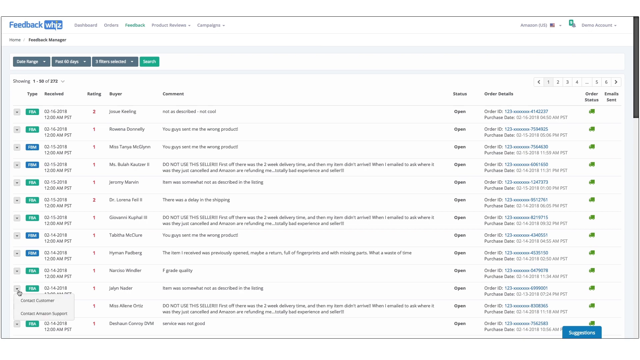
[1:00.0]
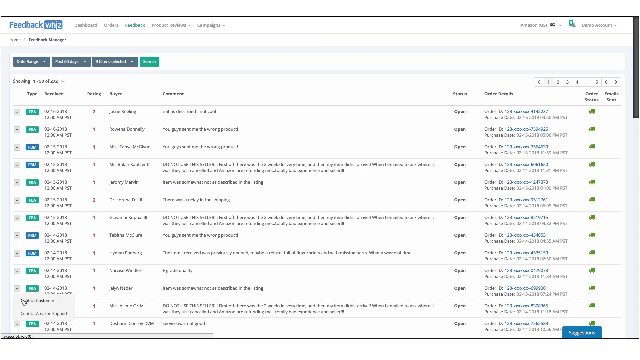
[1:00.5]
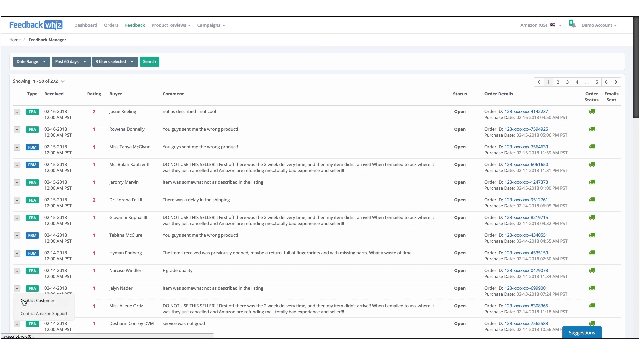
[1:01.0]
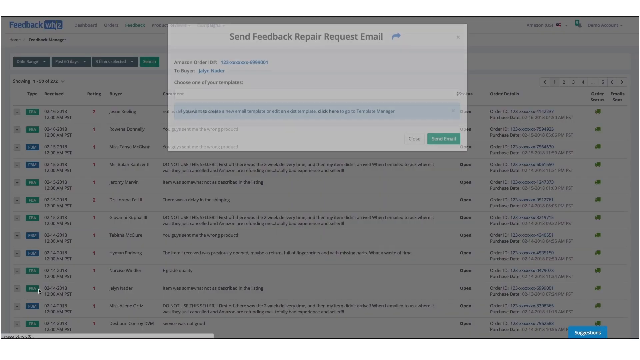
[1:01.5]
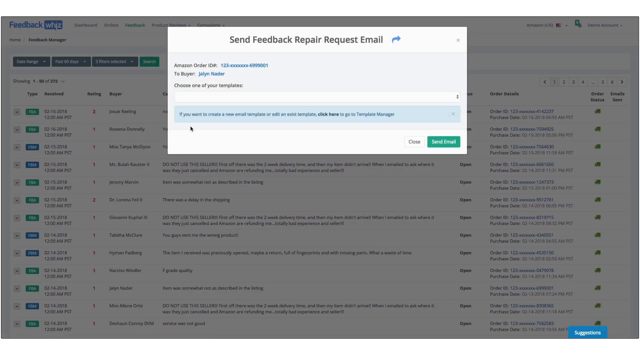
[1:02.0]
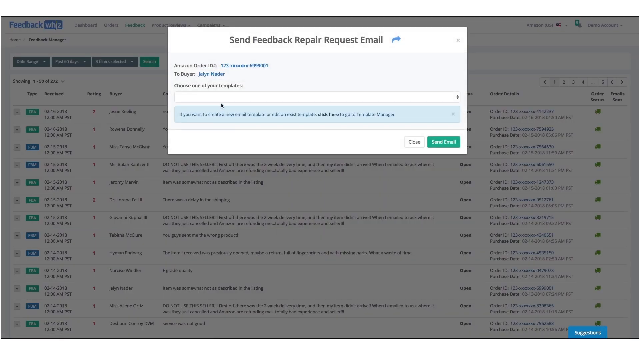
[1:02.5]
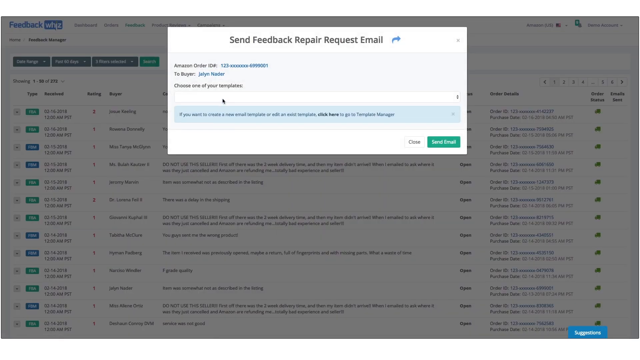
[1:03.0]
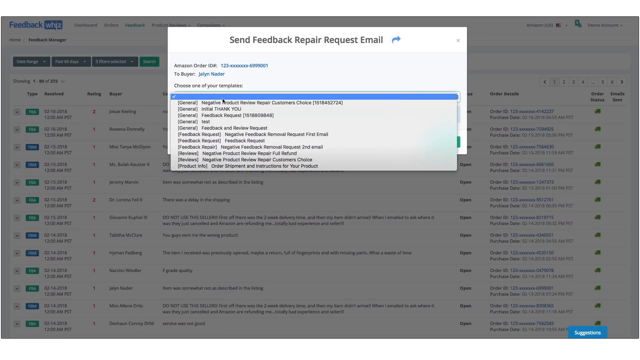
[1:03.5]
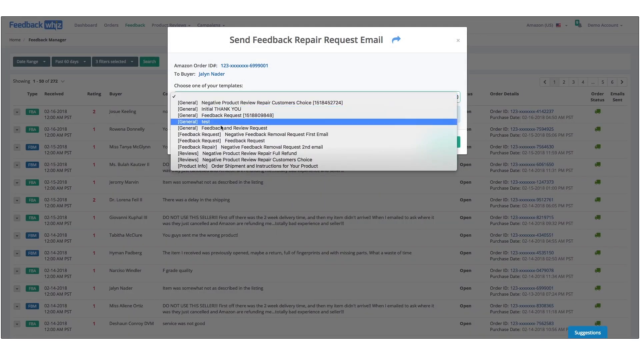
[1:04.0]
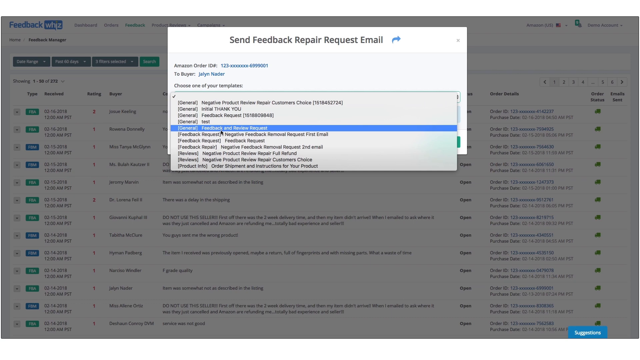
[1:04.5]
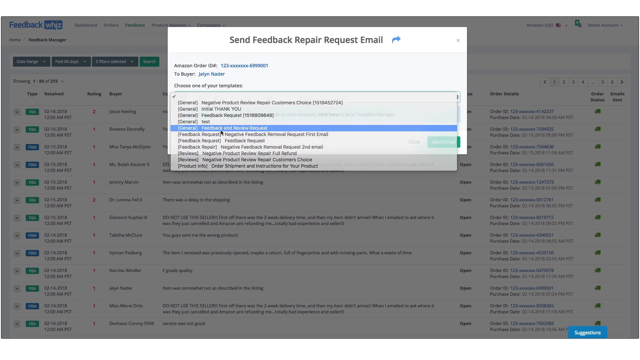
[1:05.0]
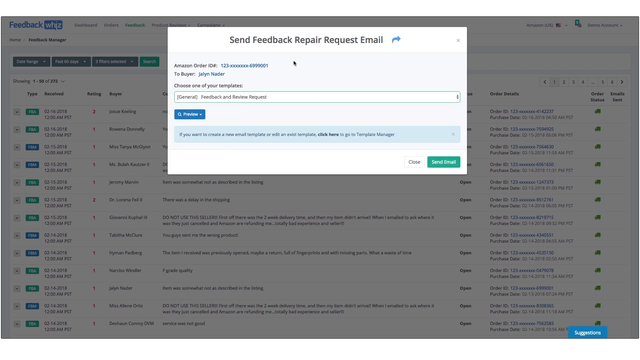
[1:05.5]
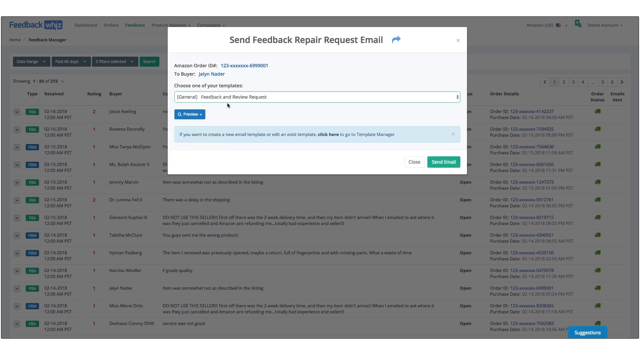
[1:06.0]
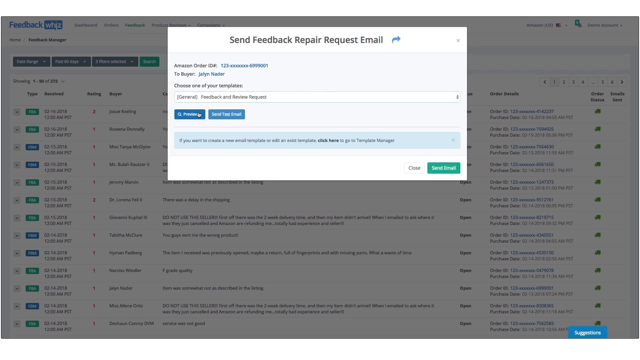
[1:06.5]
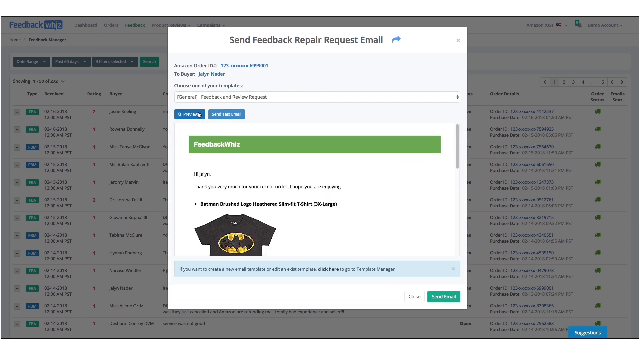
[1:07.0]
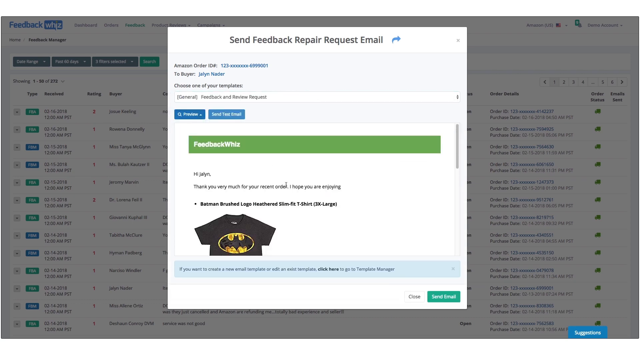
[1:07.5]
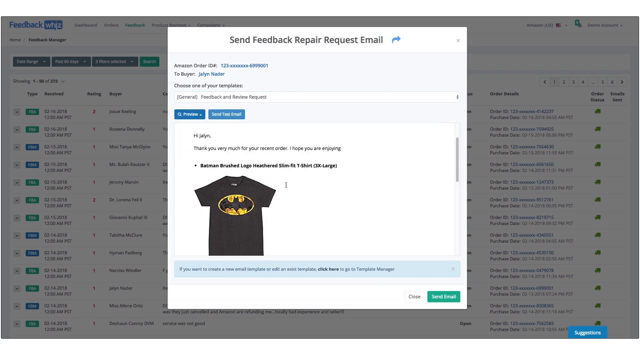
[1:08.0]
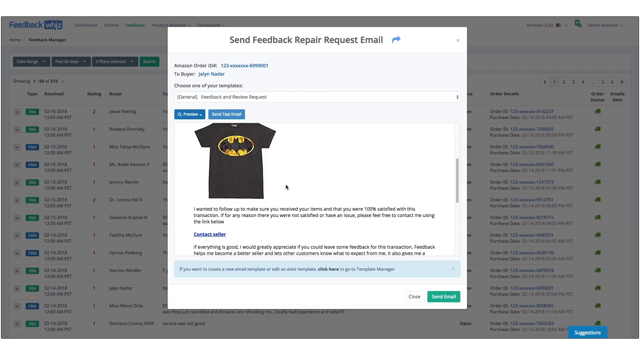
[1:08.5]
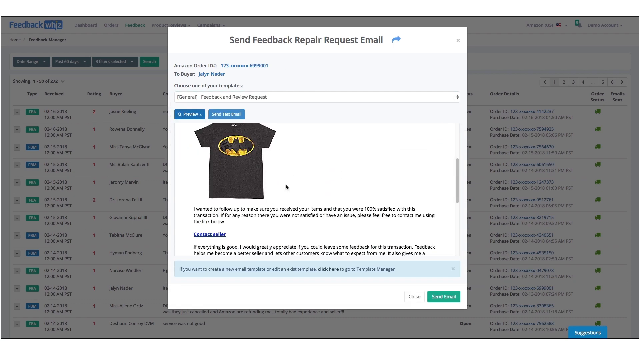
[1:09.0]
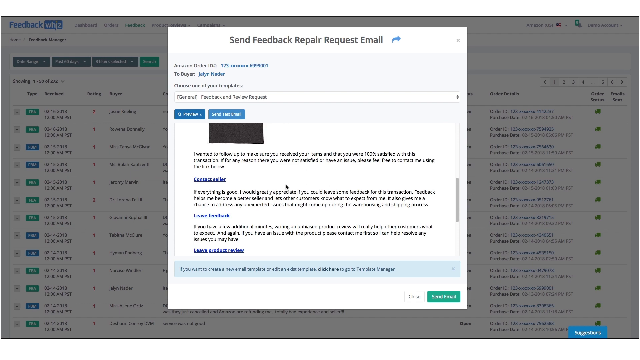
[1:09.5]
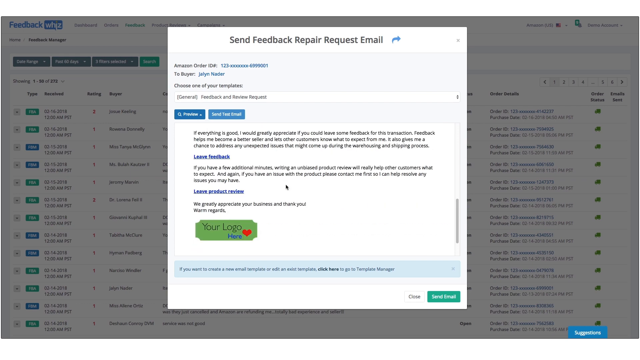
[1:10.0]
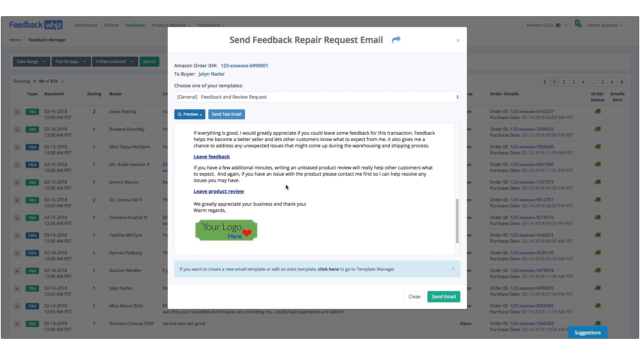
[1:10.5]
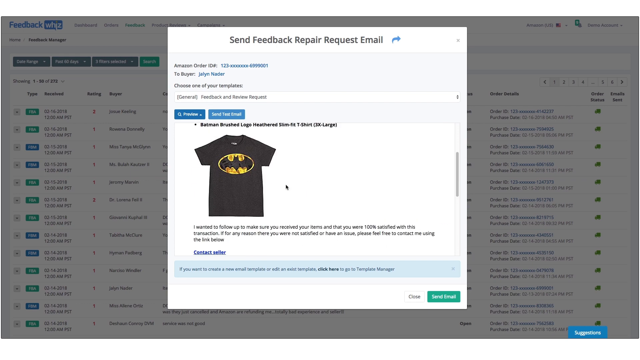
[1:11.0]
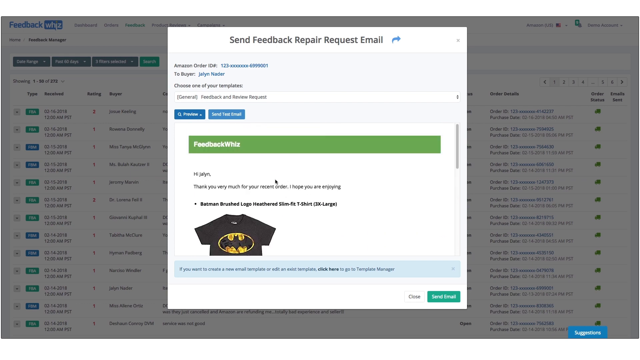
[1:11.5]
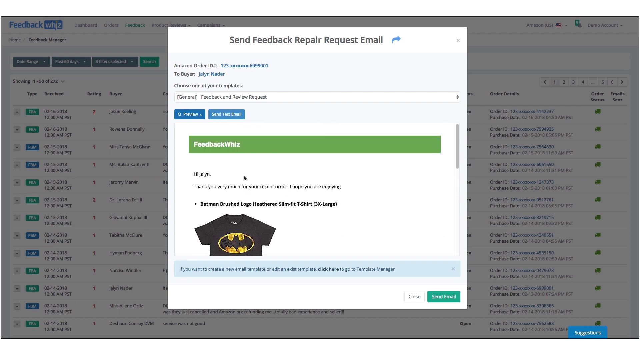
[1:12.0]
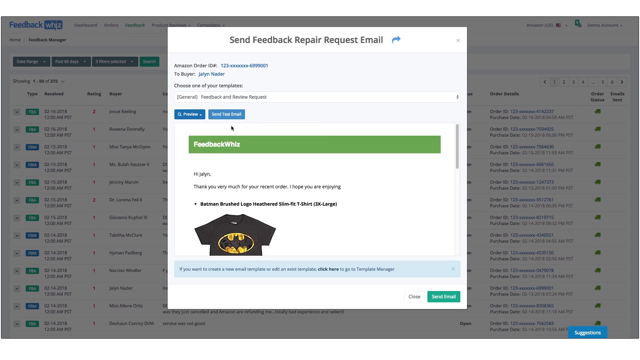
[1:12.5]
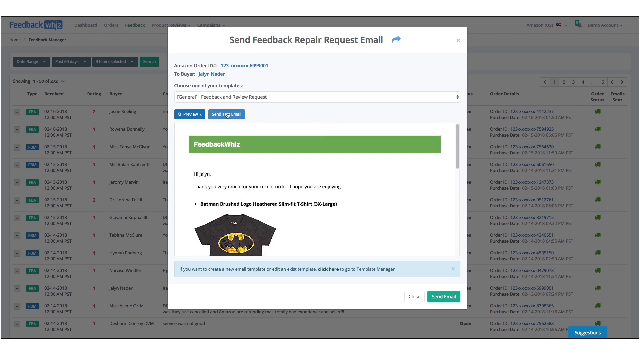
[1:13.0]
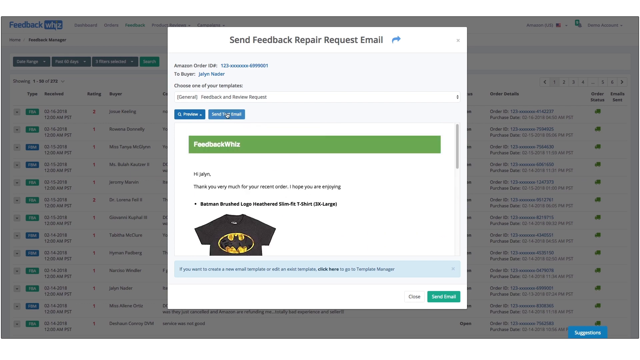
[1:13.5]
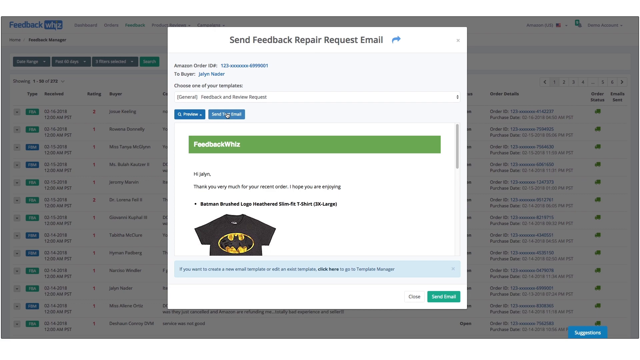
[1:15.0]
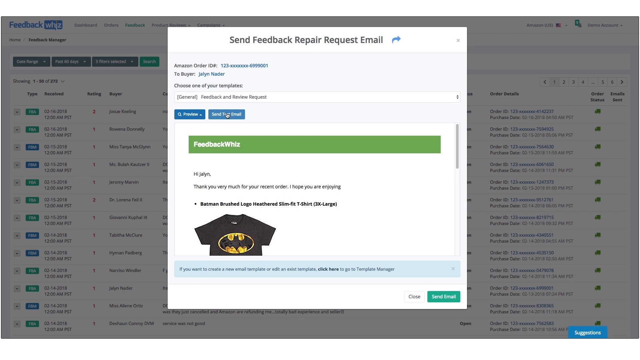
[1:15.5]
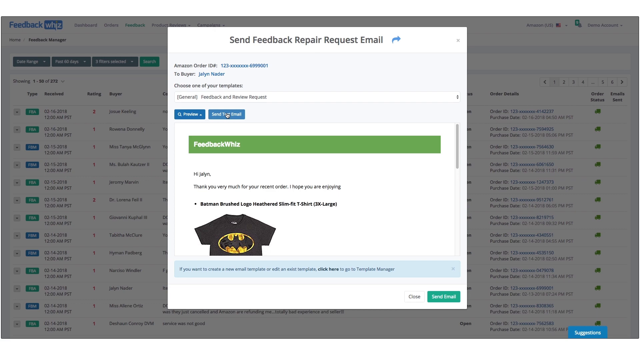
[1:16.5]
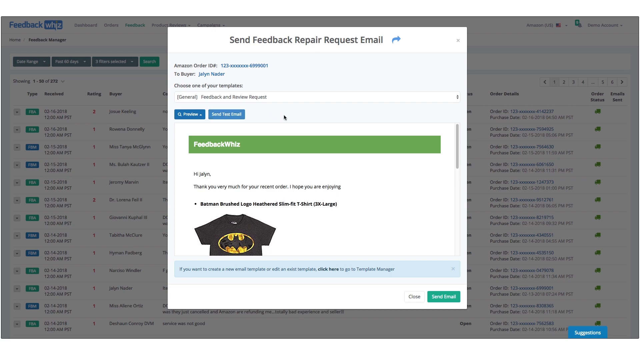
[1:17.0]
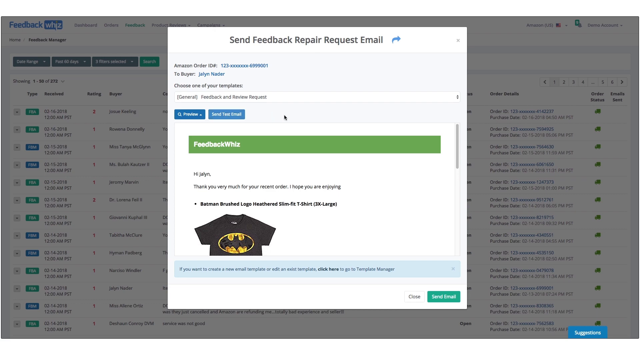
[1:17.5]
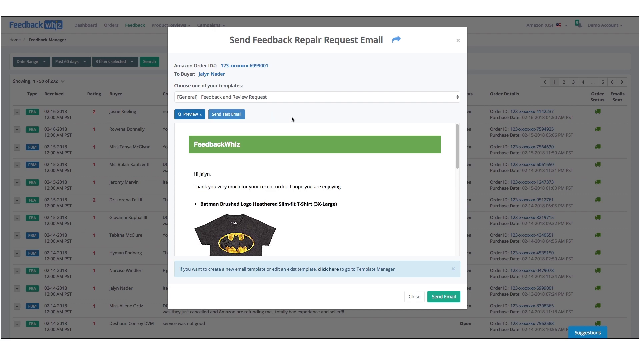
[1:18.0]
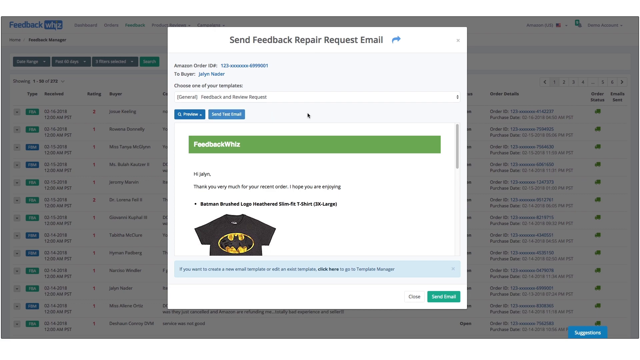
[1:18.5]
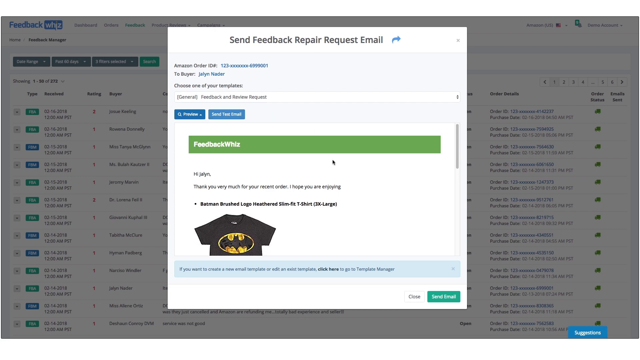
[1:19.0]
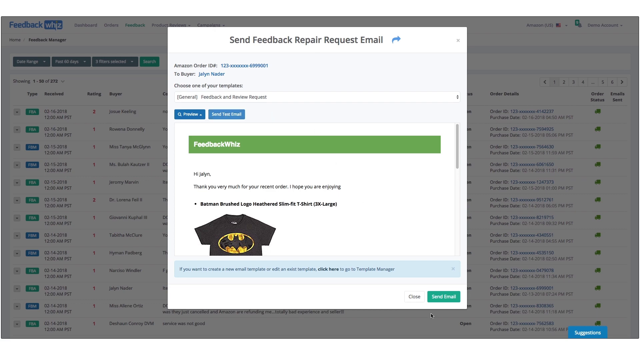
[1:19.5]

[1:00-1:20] The software program shows sending a feedback or repair request email; the whole screen is a little blurry and hard to decipher. It looks like one of many templates can be chosen and previewed. The previewed email reads "Thank you very much for your order" and "I hope you're enjoying everything," and contains a picture of a Batman t-shirt with a bat on it. The email appears to be from the company to the buyer, offering a thank-you and ways to be contacted for feedback or issues. The FeedbackWiz program is shown with the dashboard, orders, feedback, product reviews and campaigns menu, and a demo account appears on the right side.